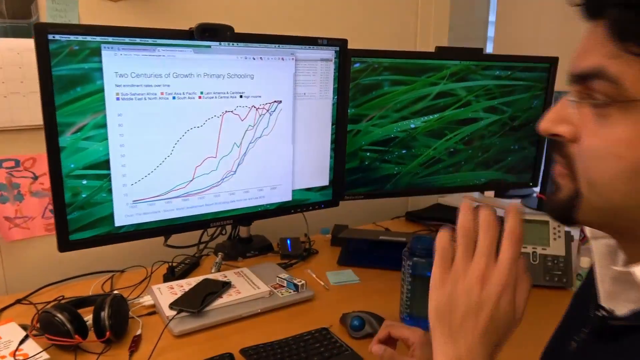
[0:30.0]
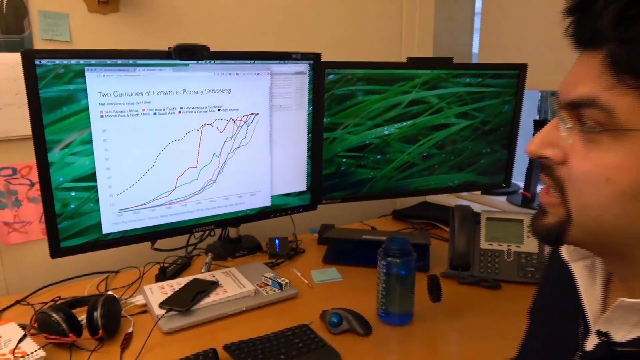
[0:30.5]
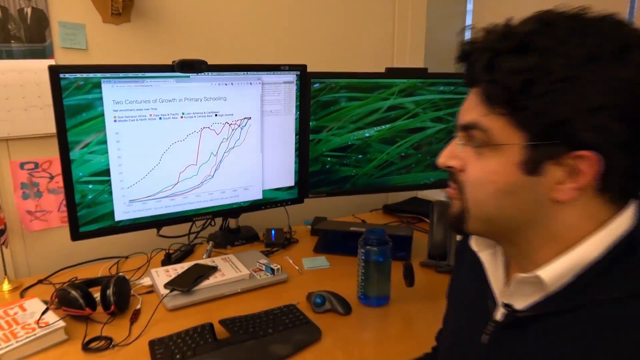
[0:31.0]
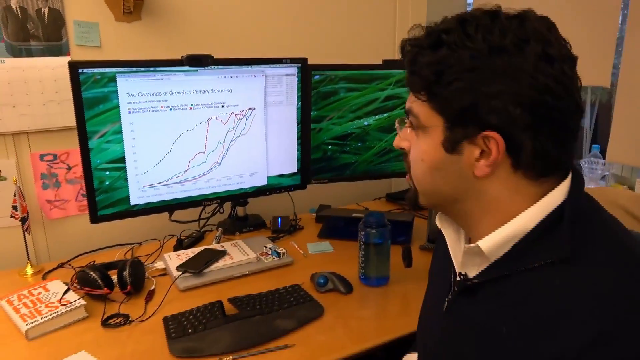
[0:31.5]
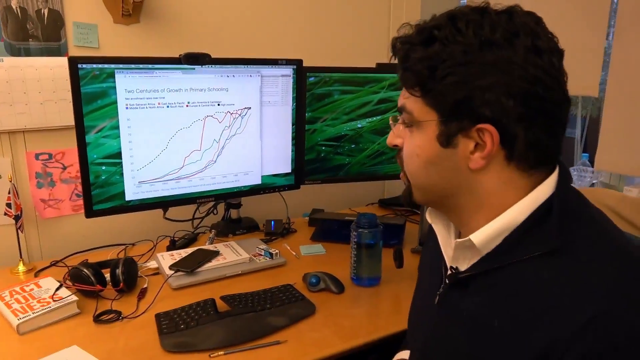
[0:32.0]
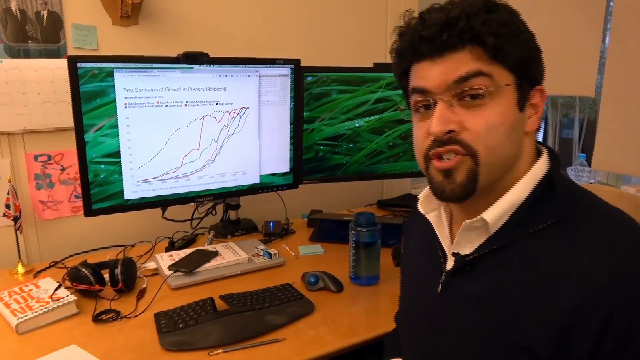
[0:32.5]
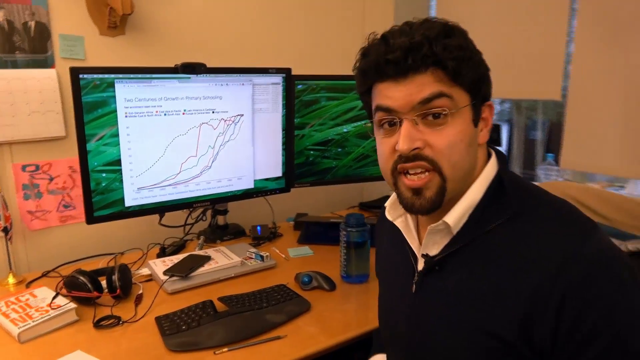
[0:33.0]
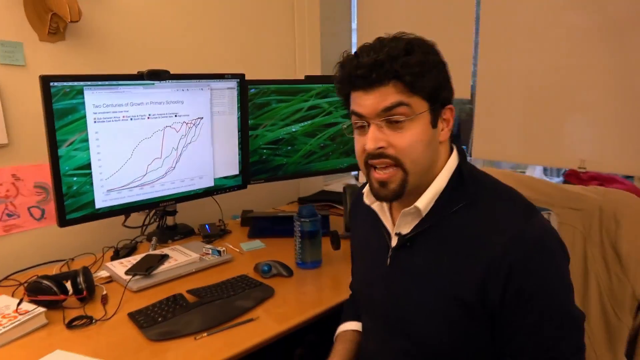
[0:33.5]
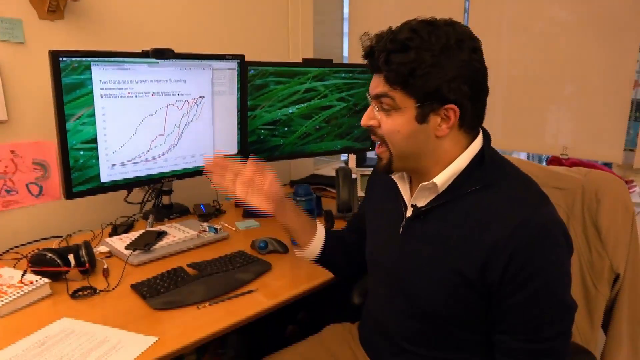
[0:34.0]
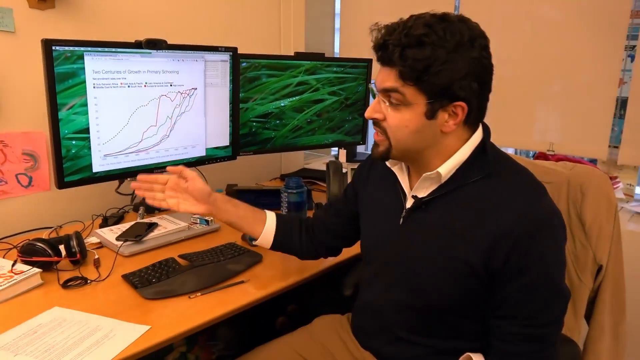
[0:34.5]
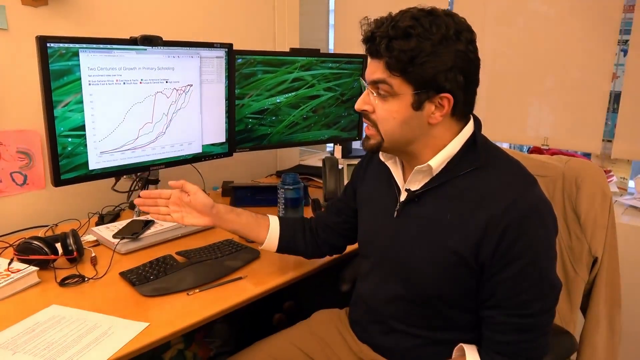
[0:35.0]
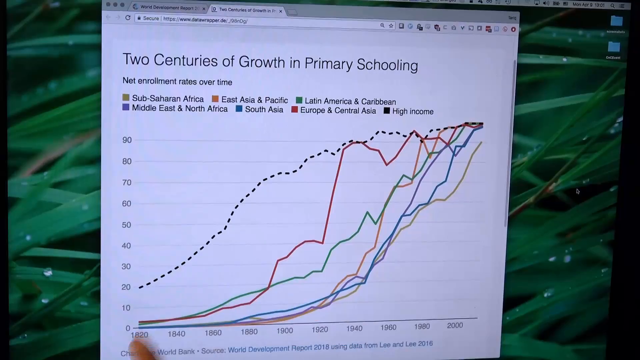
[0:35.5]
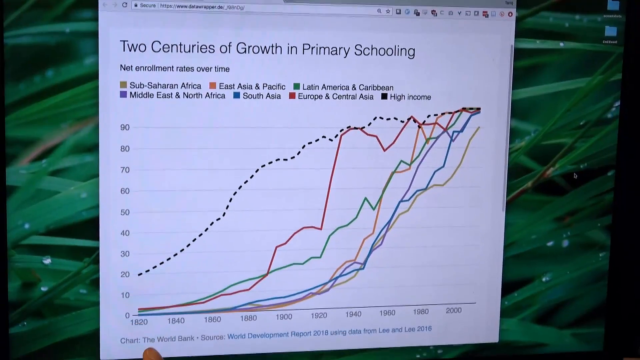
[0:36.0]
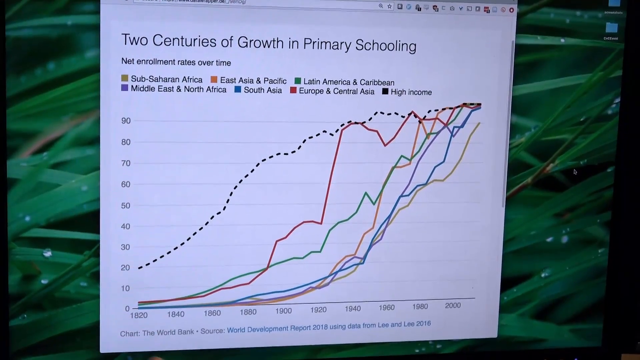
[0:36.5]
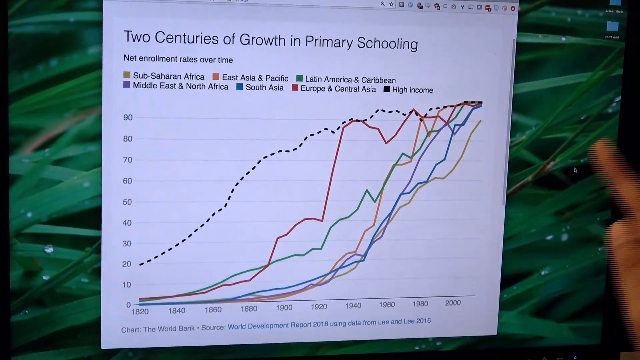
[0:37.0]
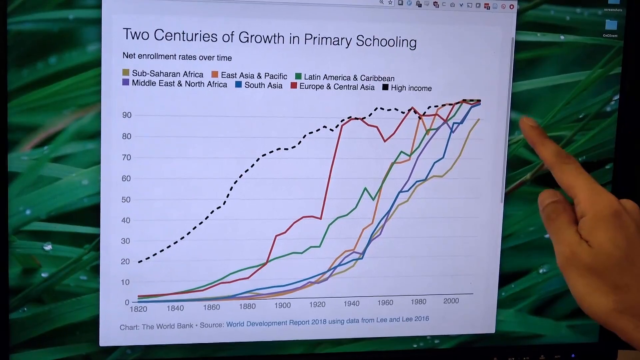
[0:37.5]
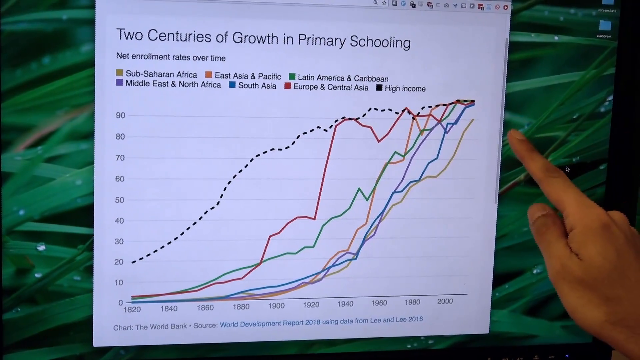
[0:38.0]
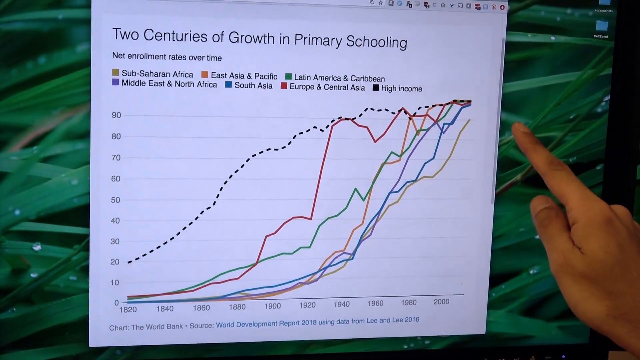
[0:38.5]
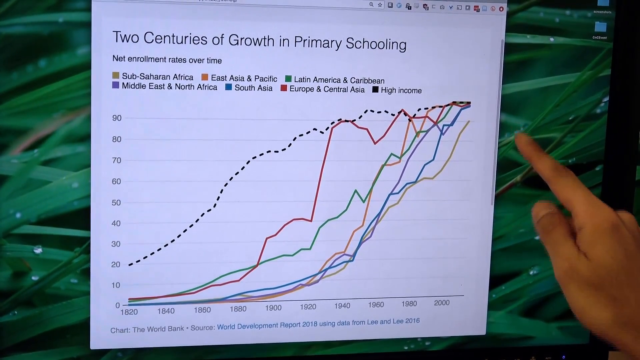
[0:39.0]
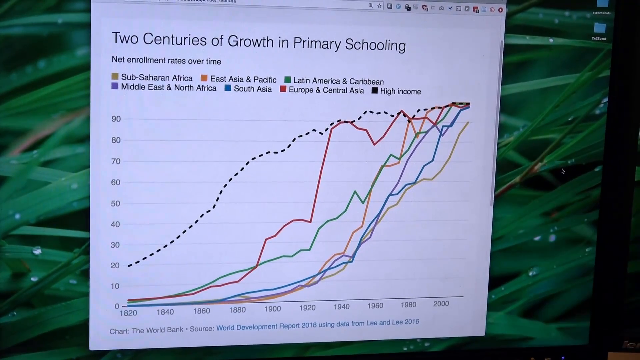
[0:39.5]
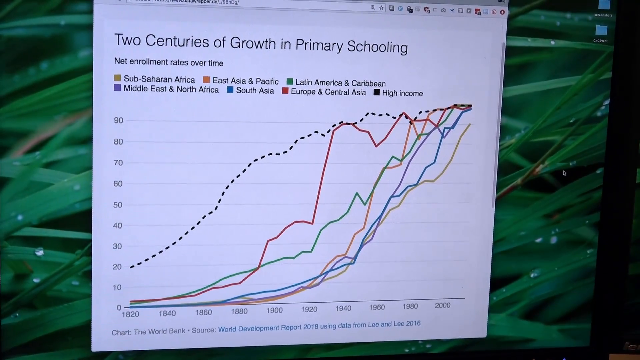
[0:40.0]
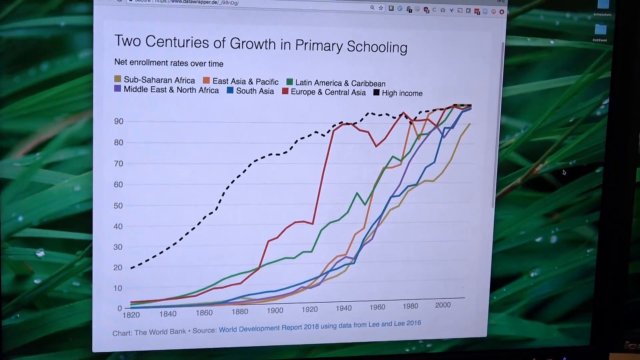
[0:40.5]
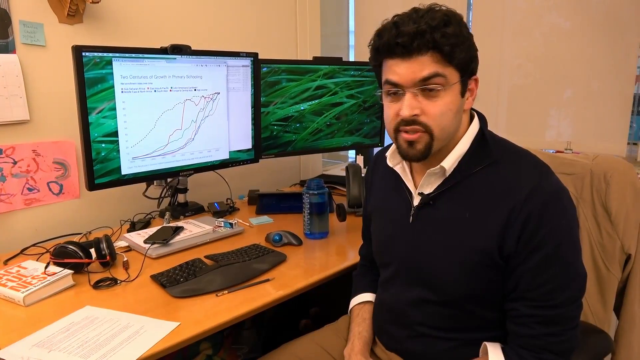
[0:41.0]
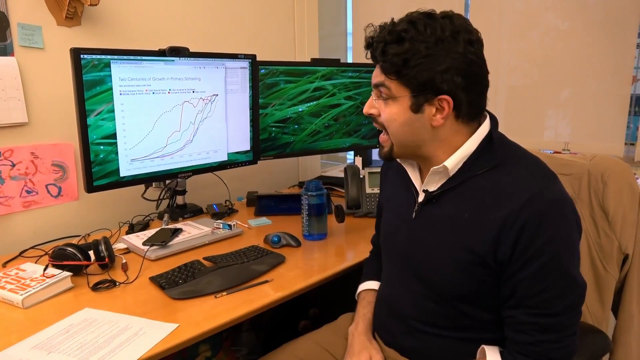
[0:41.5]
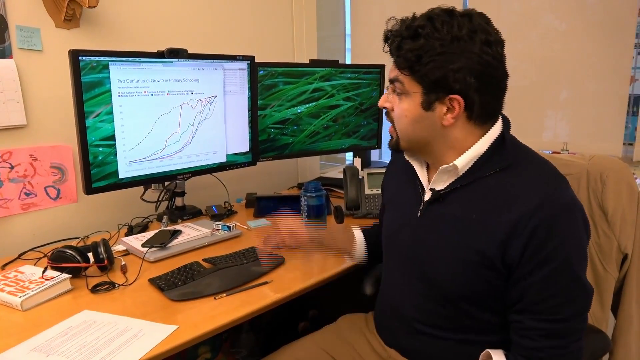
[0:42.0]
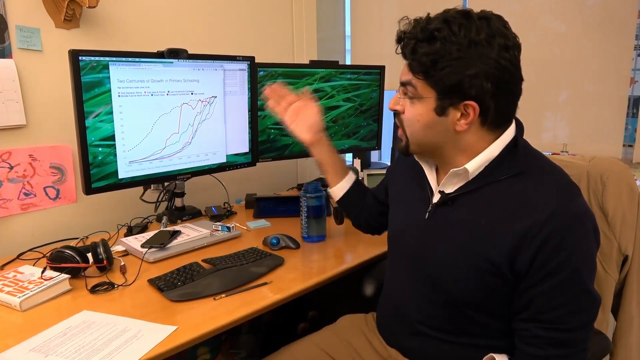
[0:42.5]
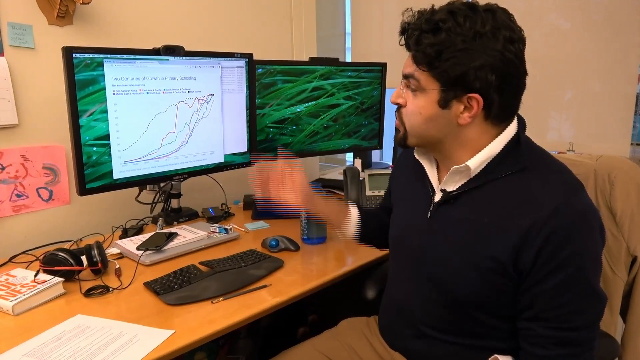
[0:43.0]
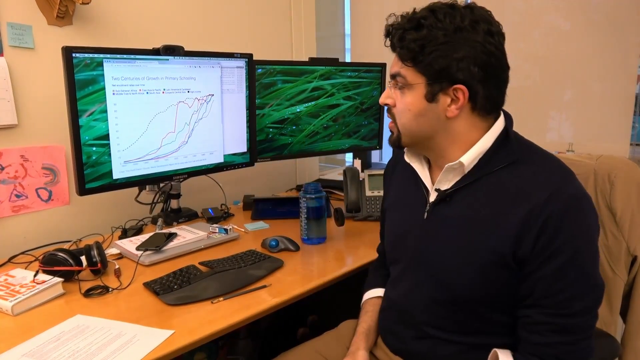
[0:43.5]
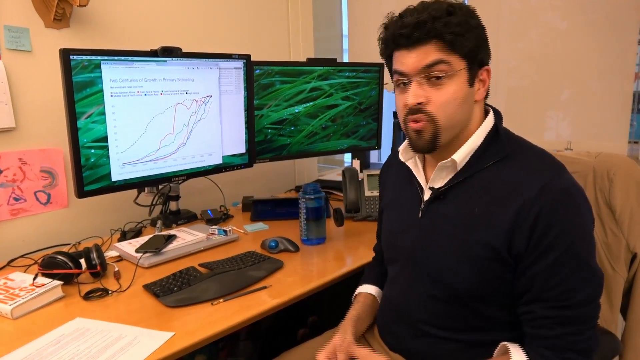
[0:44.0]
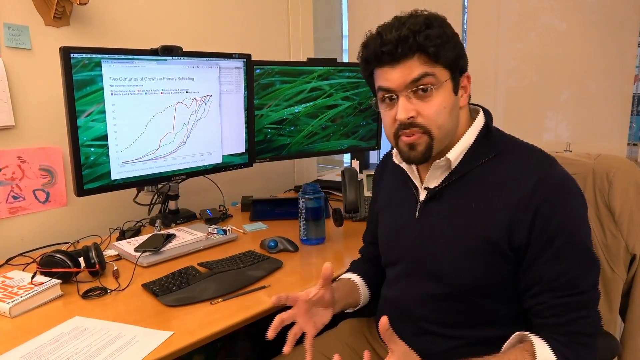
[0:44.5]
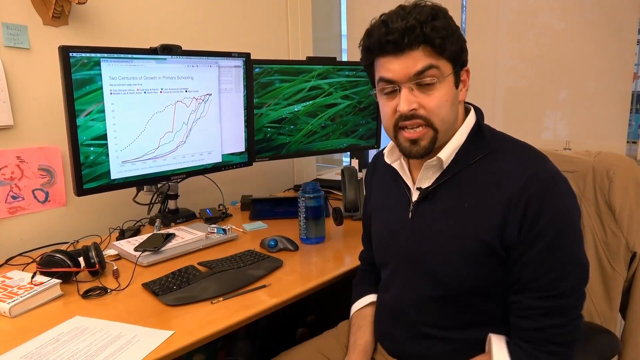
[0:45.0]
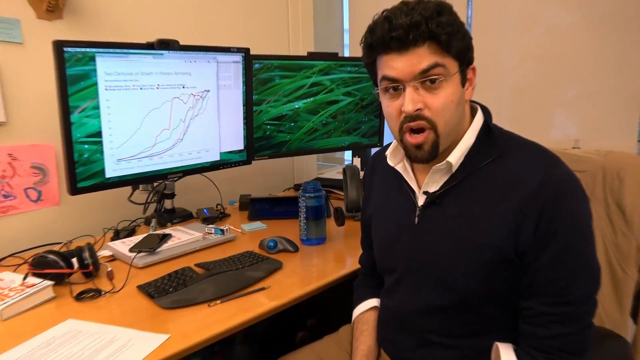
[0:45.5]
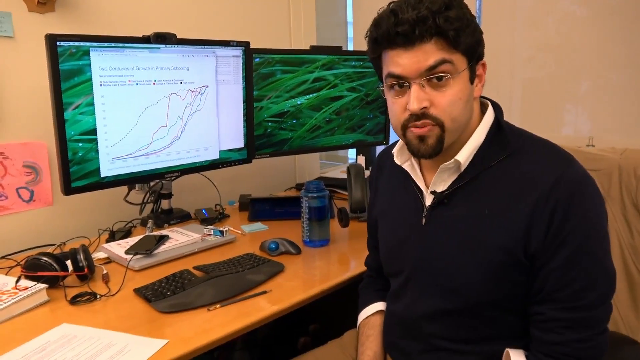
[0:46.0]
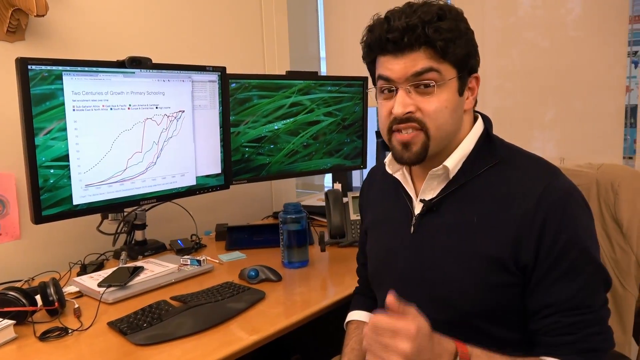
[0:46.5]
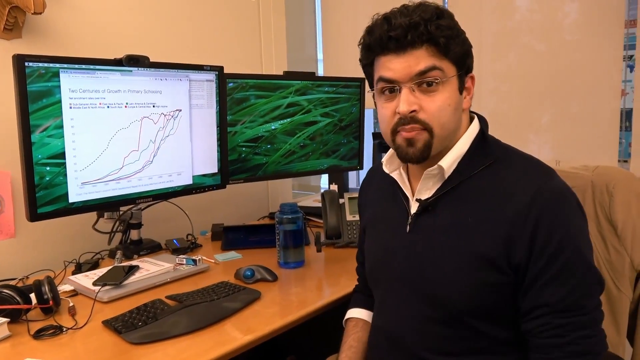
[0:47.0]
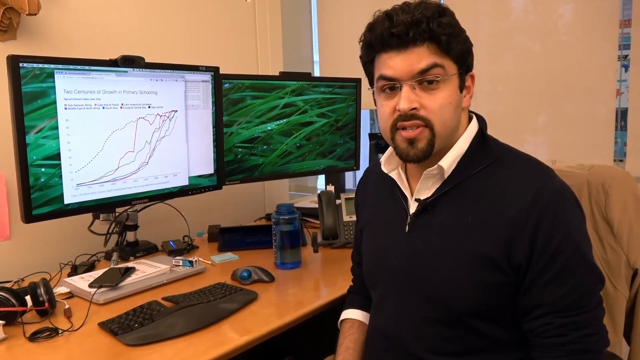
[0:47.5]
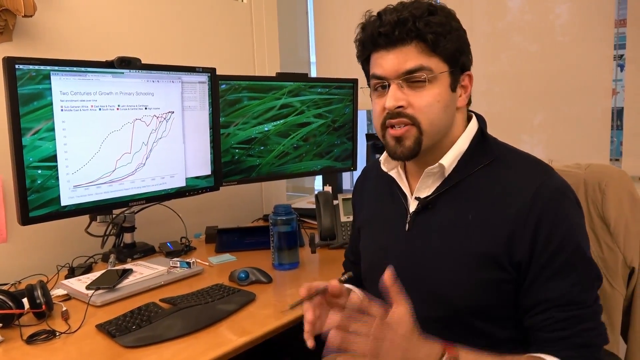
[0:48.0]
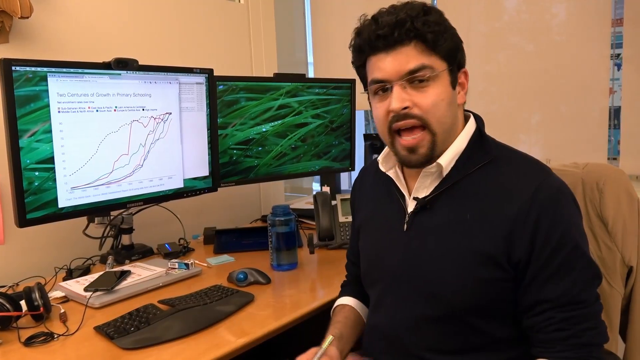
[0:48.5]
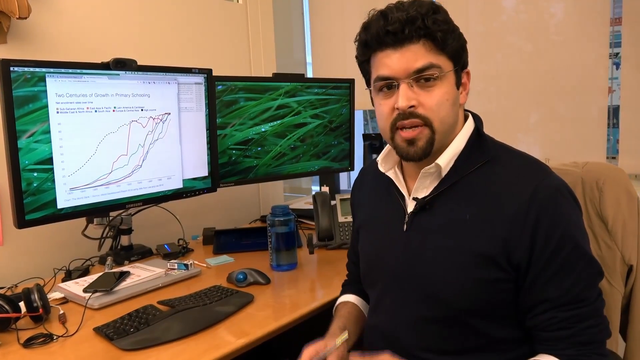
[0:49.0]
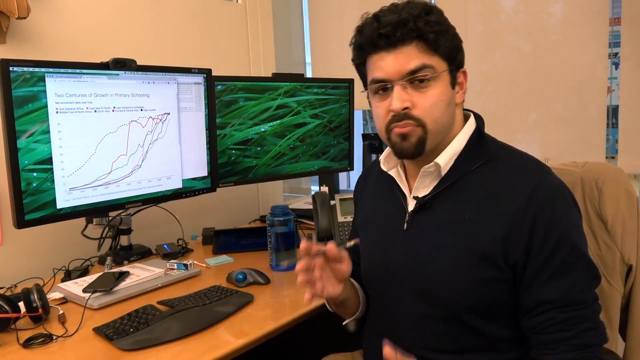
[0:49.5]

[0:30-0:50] Sitting down, the man shows the computer screen, which displays a plotted graph with a key, for two centuries of growth in primary schooling. There are several lines, and they all go up in the same direction. He appears to be explaining the graph, seemingly how the plot points were arrived at and why they were placed there.